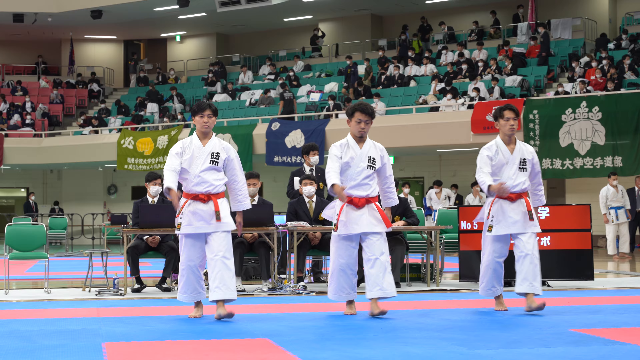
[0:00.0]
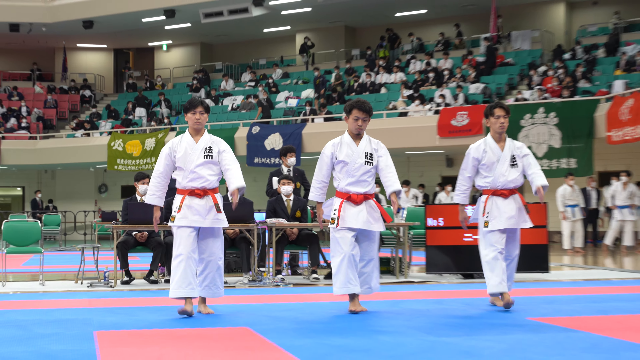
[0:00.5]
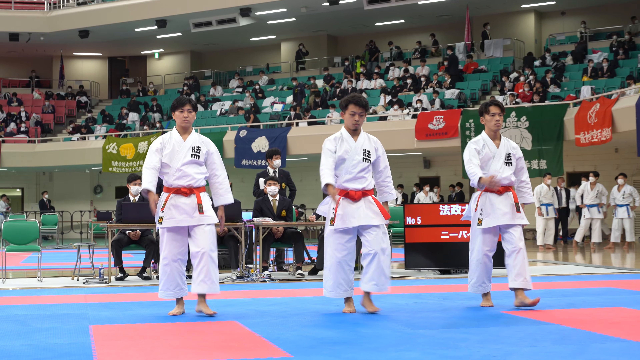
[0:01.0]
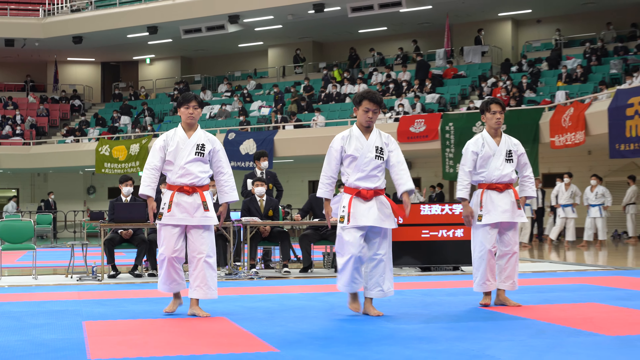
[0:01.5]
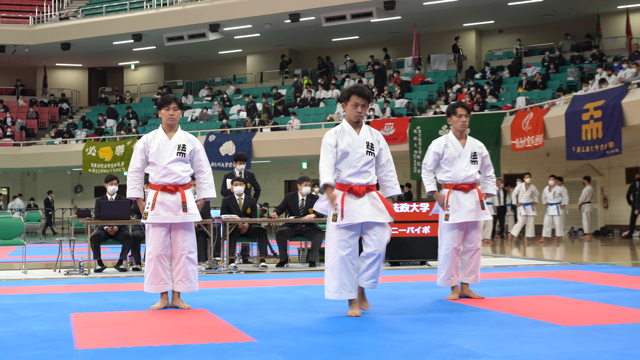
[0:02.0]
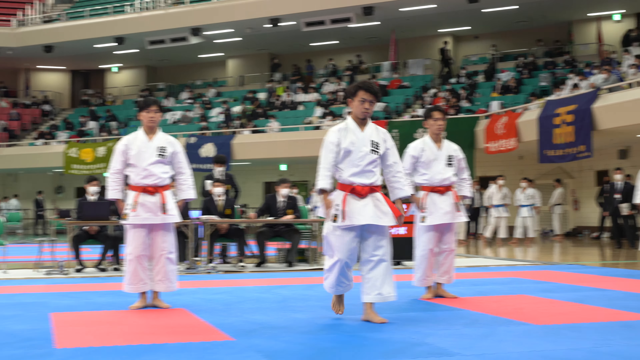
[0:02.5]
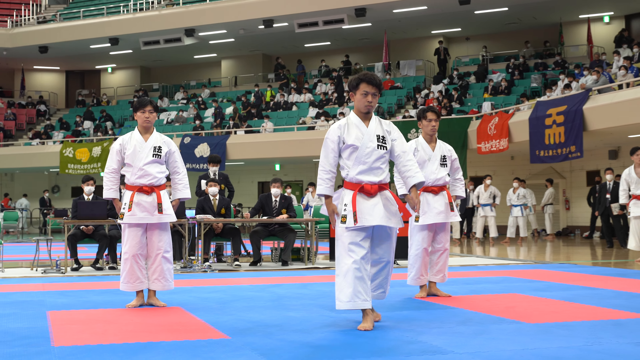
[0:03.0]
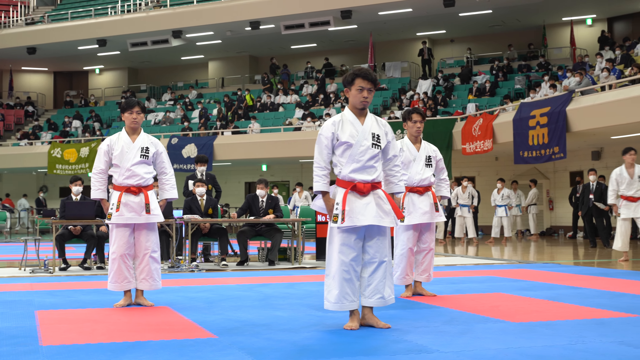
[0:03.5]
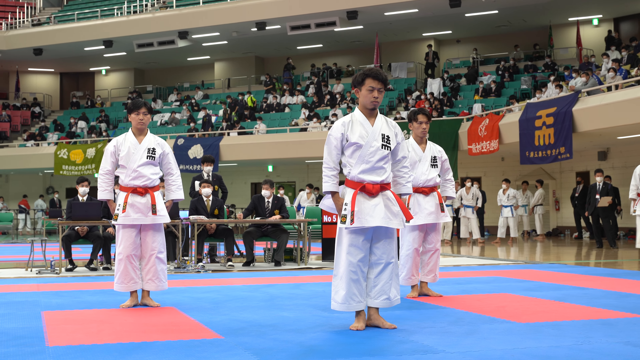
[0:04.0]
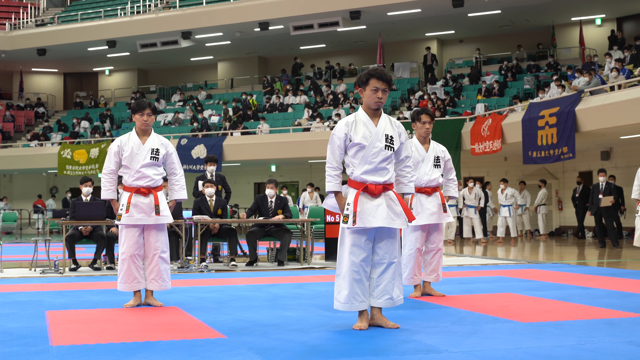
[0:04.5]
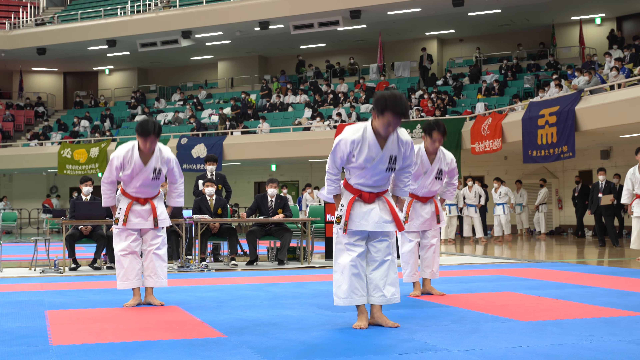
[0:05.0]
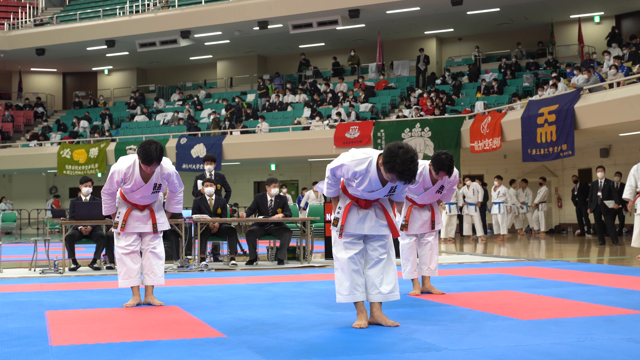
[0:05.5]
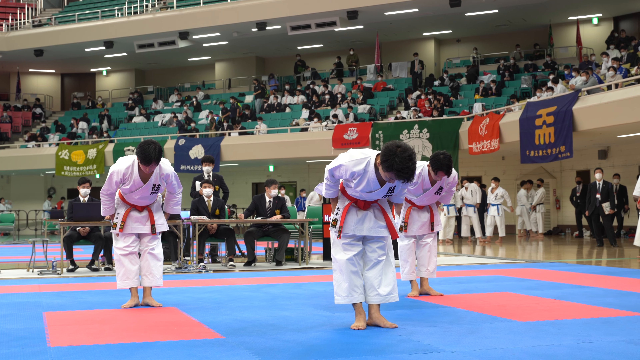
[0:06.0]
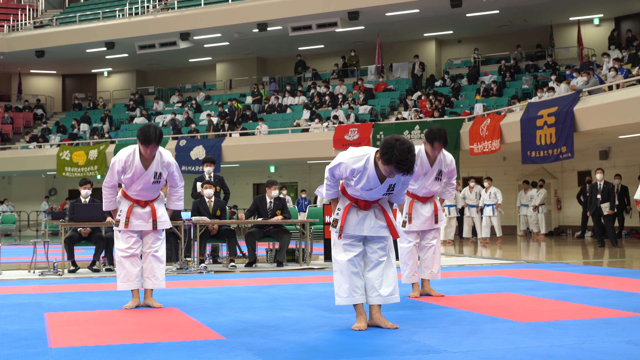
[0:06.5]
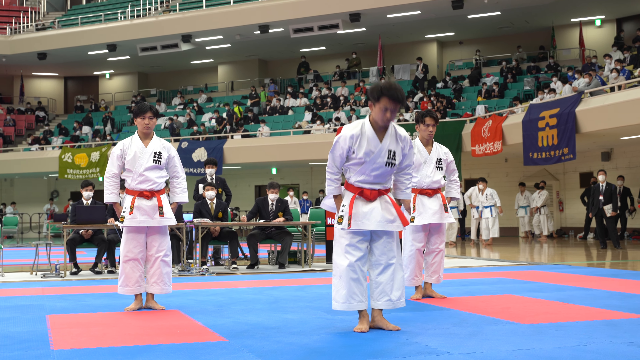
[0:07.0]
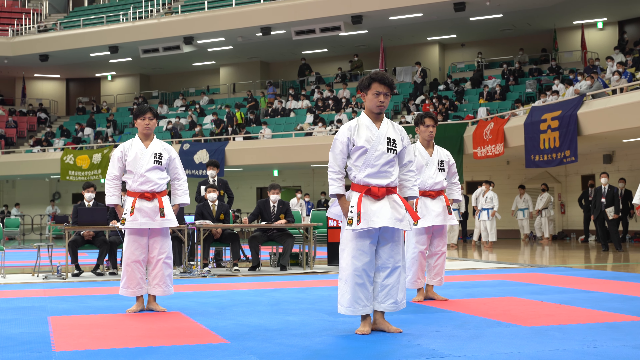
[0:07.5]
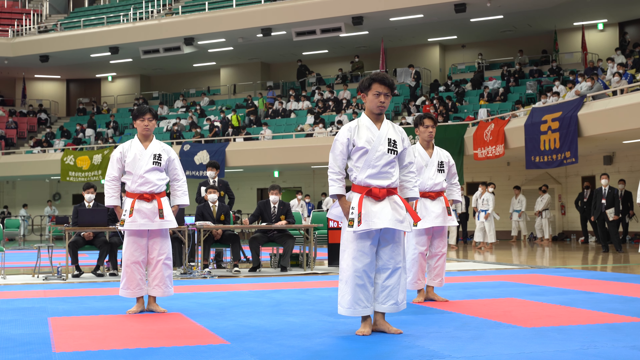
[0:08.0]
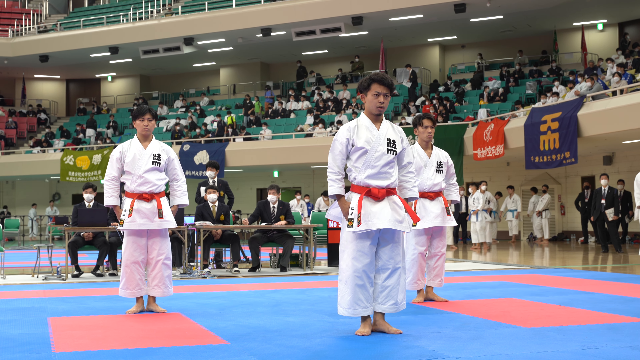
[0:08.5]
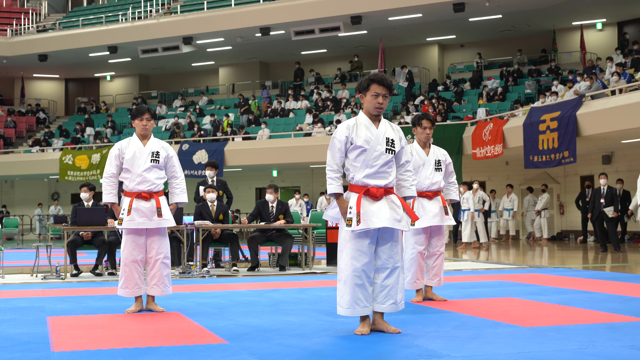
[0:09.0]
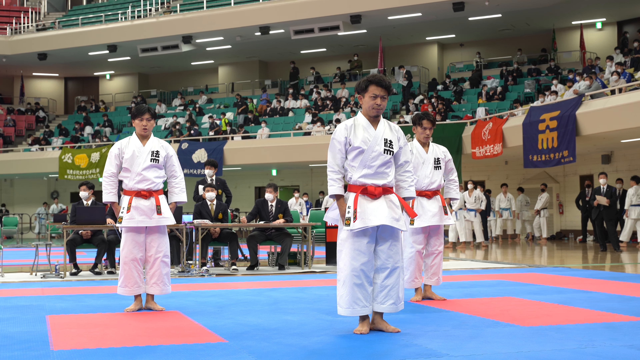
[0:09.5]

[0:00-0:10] Three Asian men in white karate uniforms stand in formation. All three wear white shirts and pants with red belts tied at the waist, and all have dark hair. They make a straight line and walk forward, and the middle man moves up farther so that he forms a corner, almost like a triangle. All three men bow. In the background are flags: a green one, a blue one, and an olive one. They are in some type of stadium with crowds of people behind them, and a table of judges wearing face masks is visible.